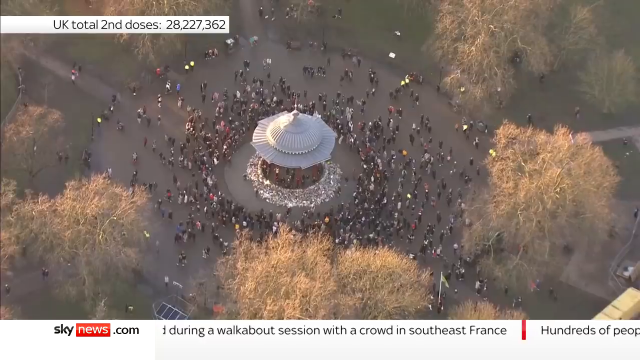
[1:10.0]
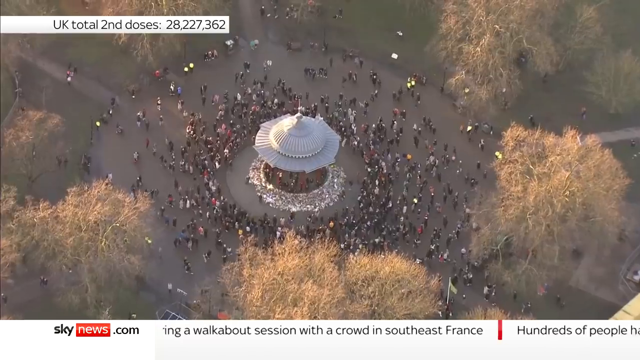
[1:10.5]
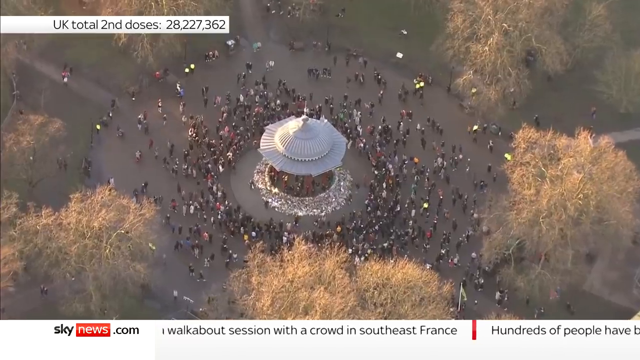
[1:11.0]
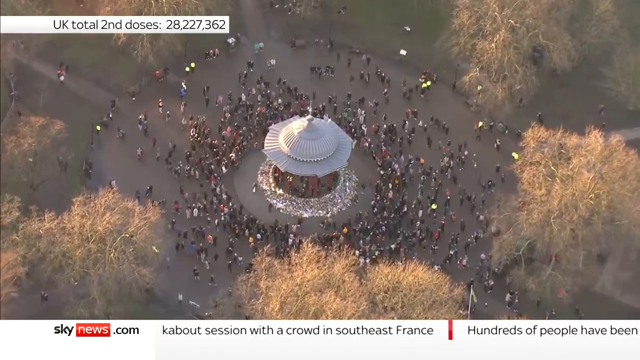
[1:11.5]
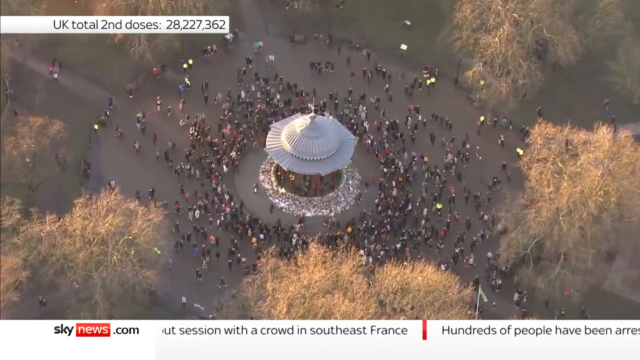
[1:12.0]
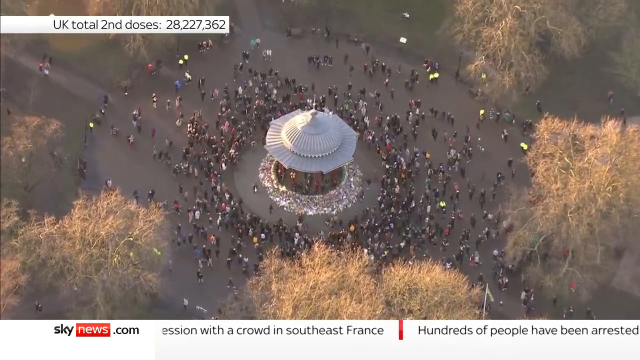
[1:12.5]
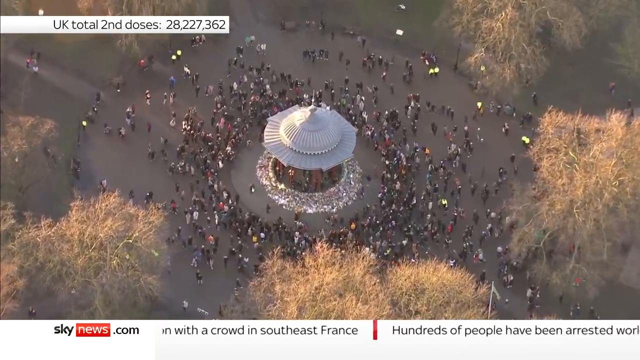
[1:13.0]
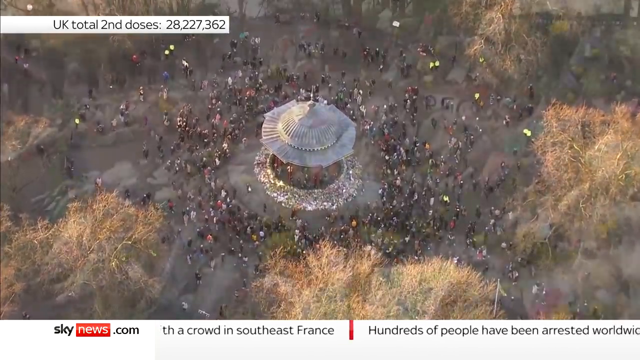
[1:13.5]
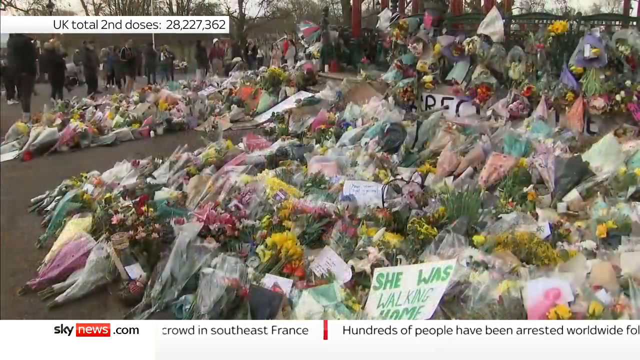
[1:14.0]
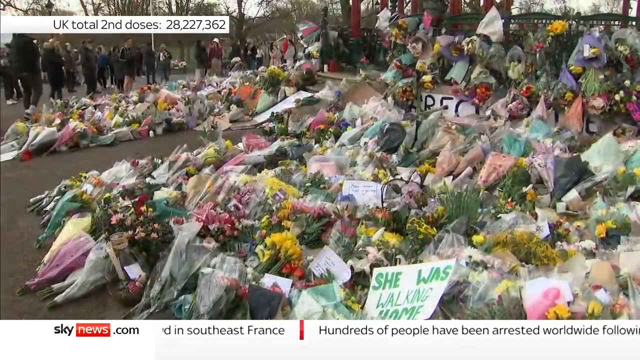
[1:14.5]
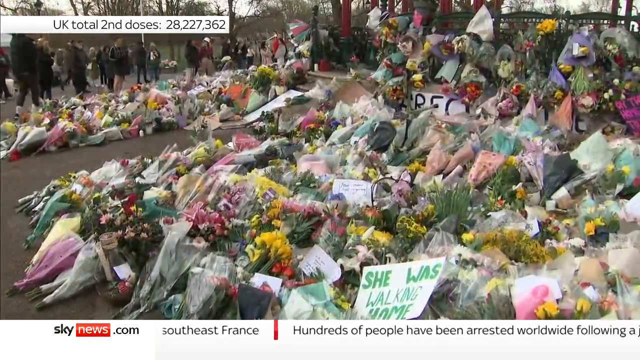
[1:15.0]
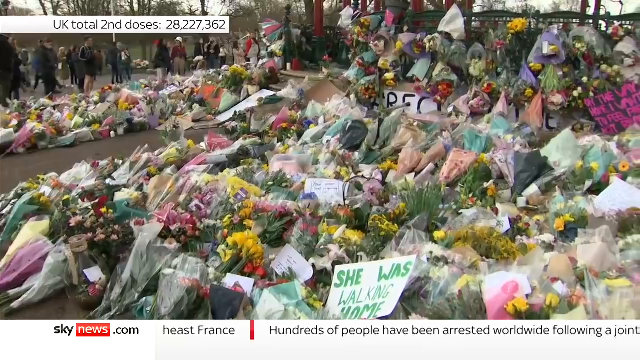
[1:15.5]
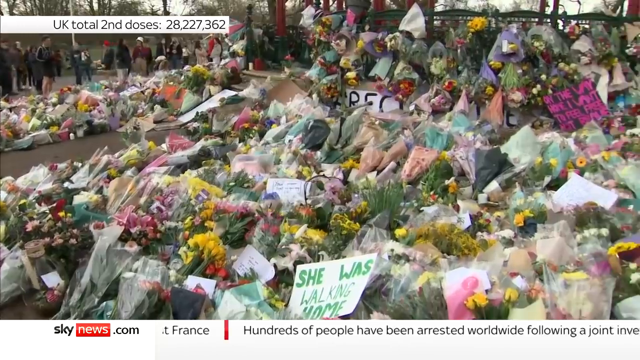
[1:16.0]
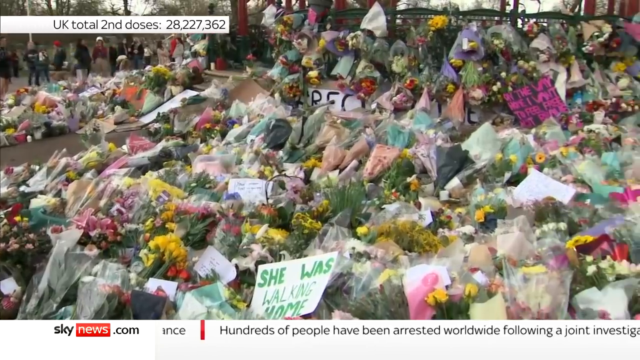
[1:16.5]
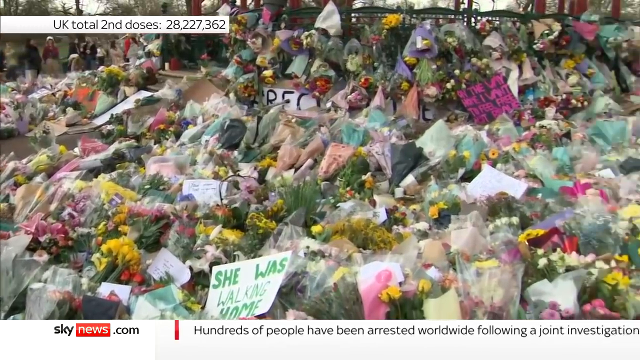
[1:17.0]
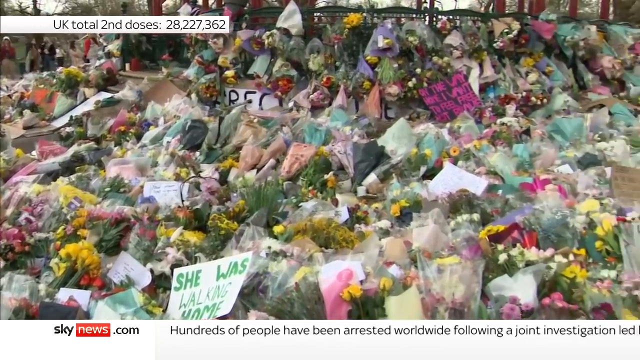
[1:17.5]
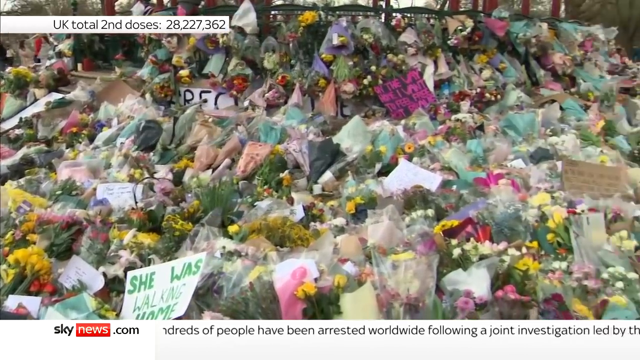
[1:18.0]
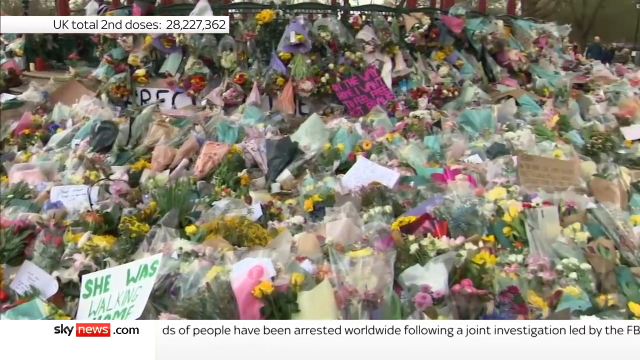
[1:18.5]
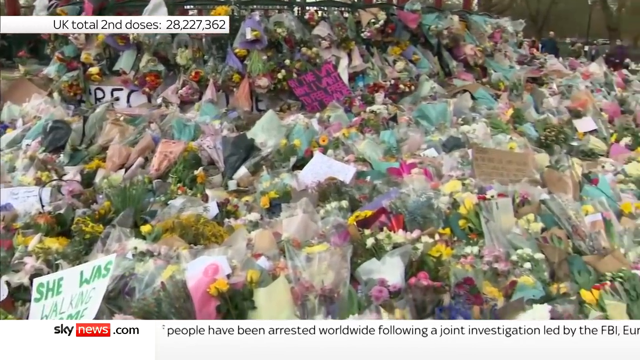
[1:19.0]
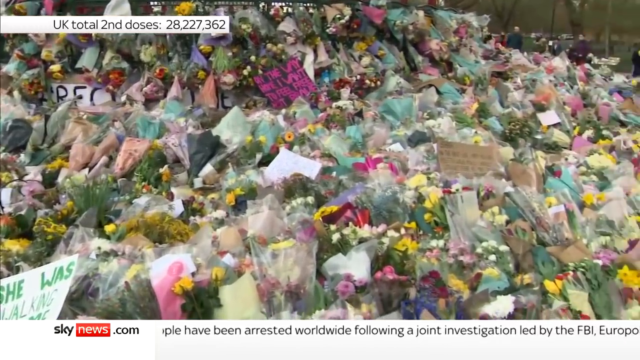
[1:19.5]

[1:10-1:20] A huge gathering takes place for the woman, and apparently a sign says "she was walking home". It looks like some sort of vigil or candlelit event, with what appears to be hundreds of people. There are seemingly hundreds of flowers and signs, and the people look concerned.